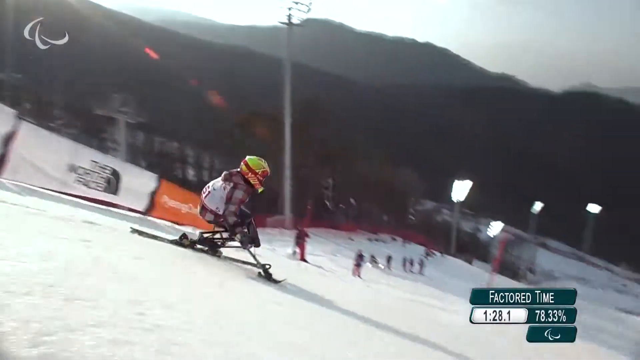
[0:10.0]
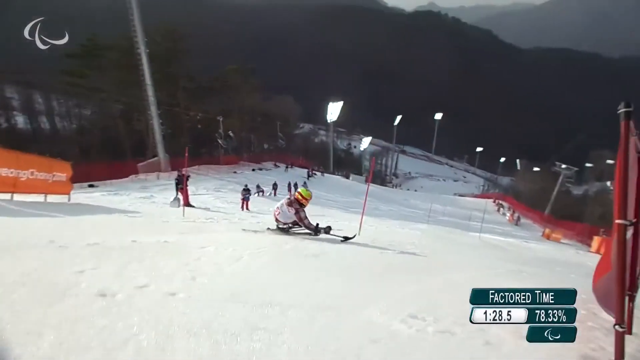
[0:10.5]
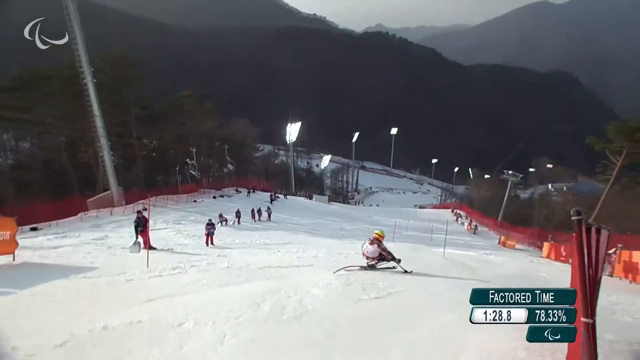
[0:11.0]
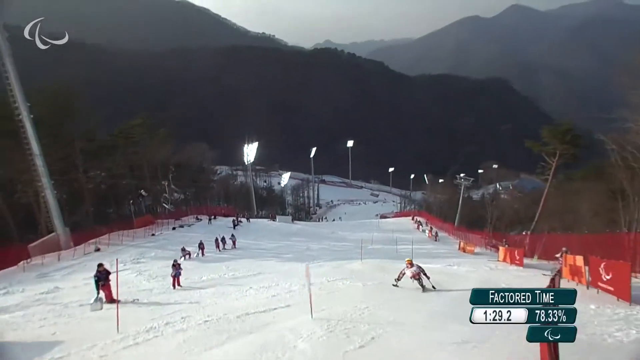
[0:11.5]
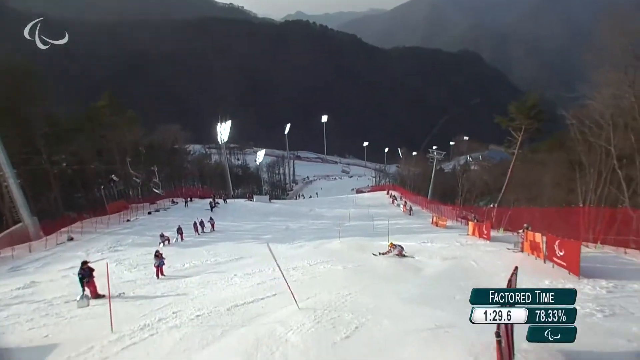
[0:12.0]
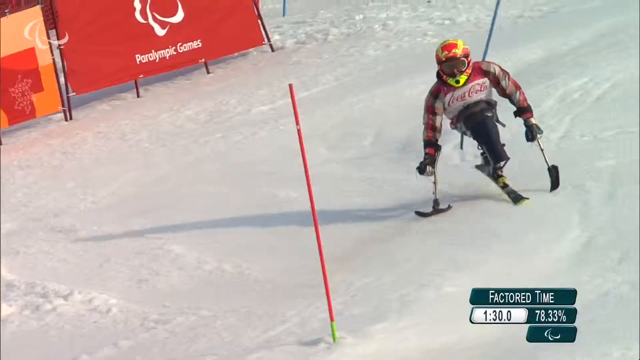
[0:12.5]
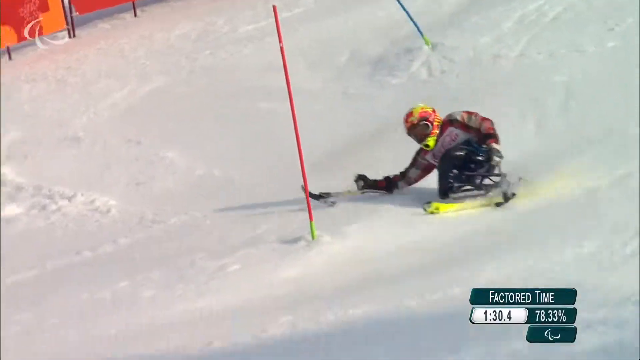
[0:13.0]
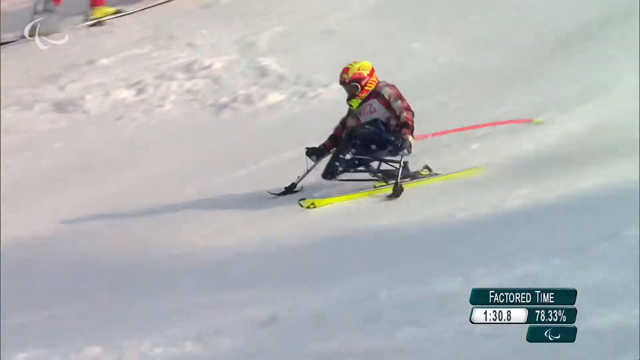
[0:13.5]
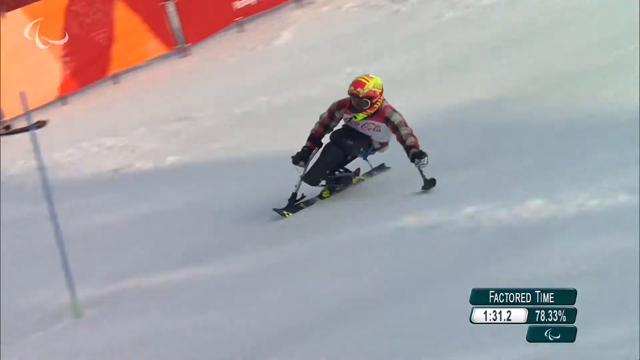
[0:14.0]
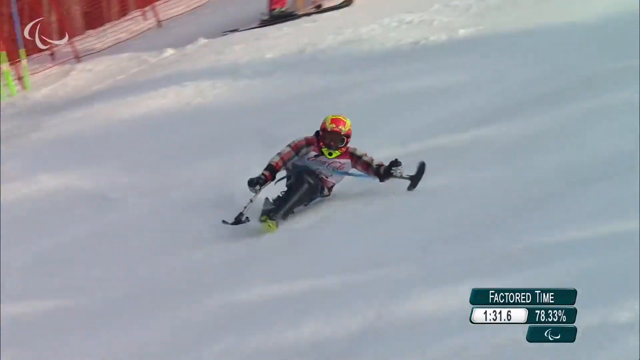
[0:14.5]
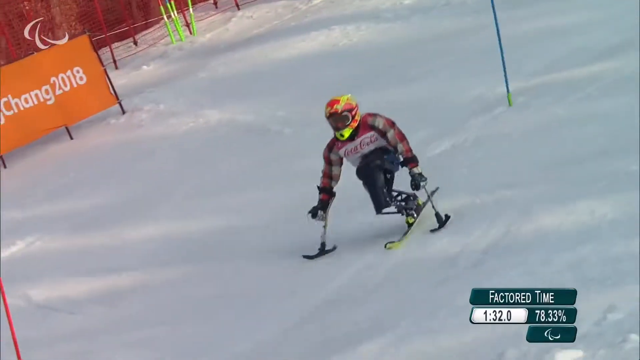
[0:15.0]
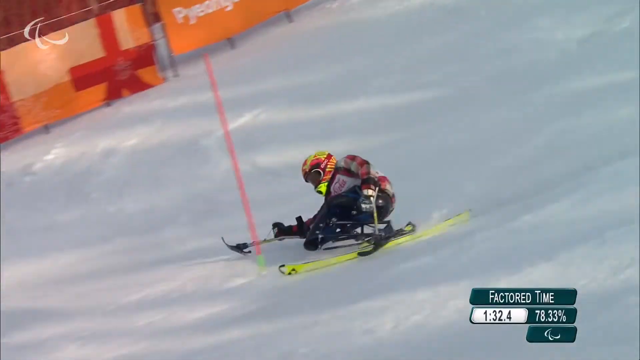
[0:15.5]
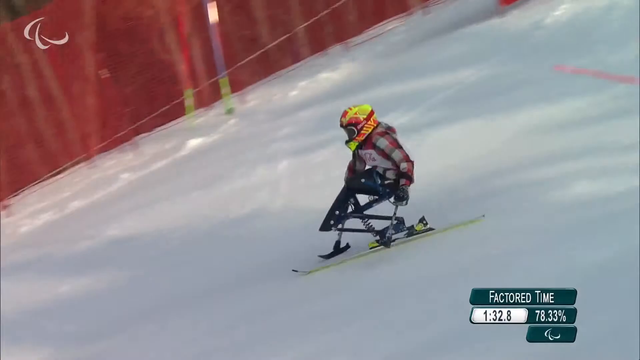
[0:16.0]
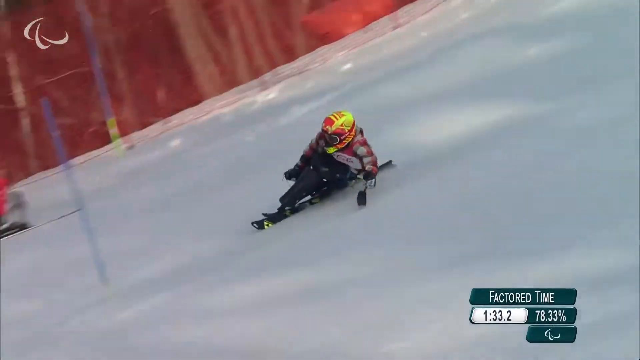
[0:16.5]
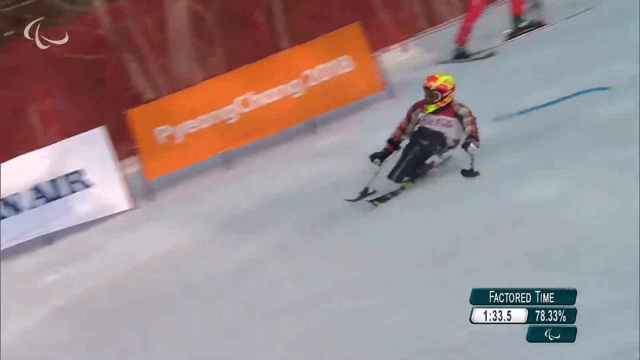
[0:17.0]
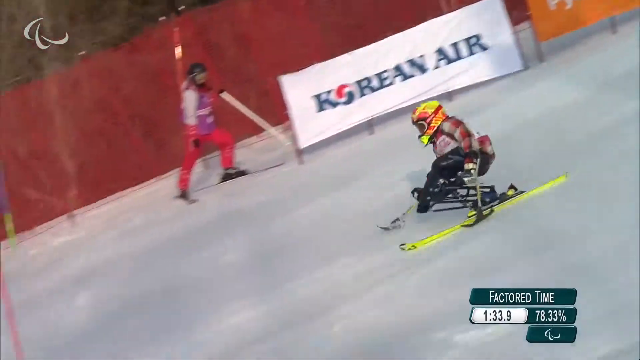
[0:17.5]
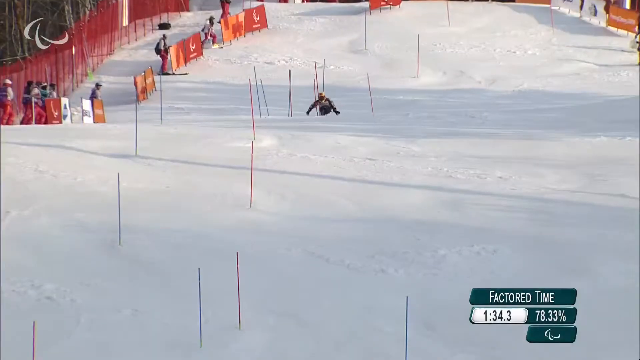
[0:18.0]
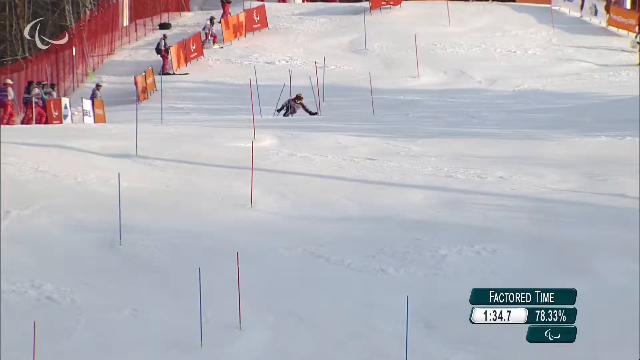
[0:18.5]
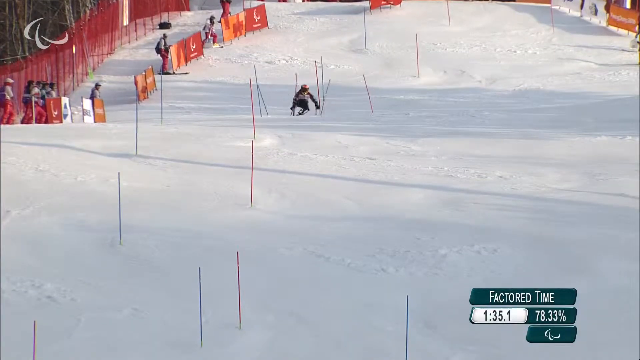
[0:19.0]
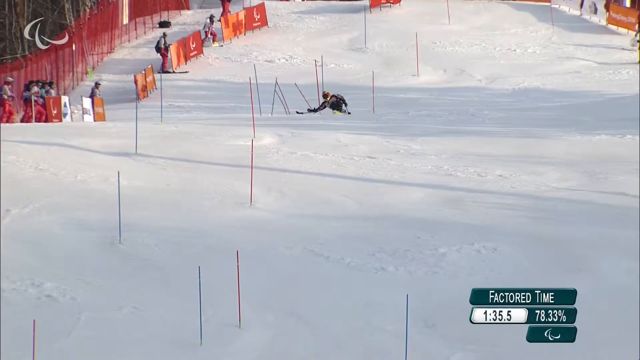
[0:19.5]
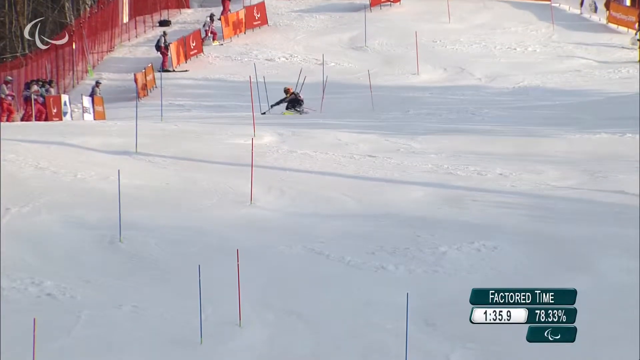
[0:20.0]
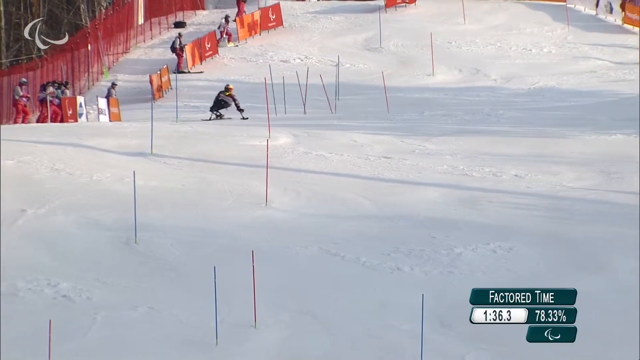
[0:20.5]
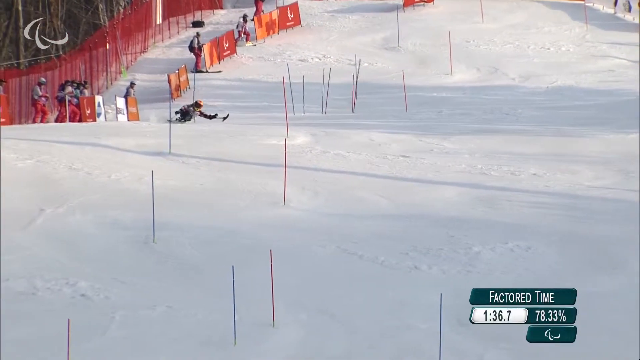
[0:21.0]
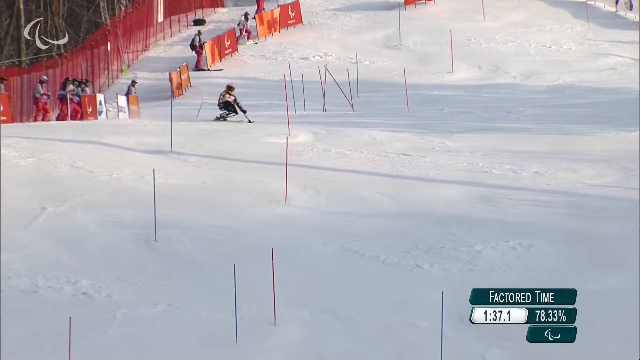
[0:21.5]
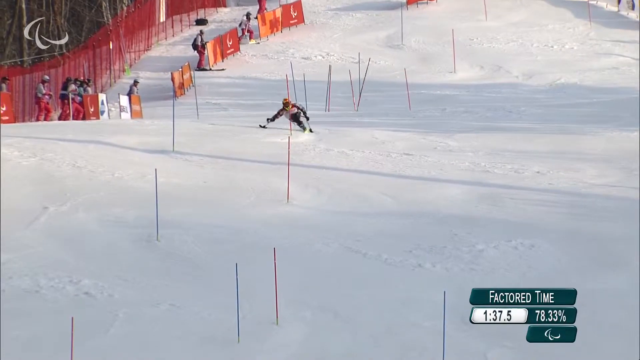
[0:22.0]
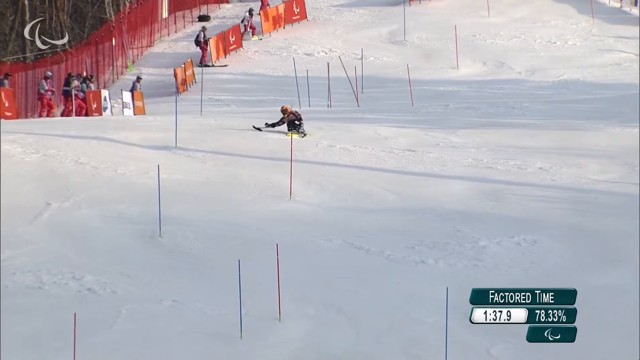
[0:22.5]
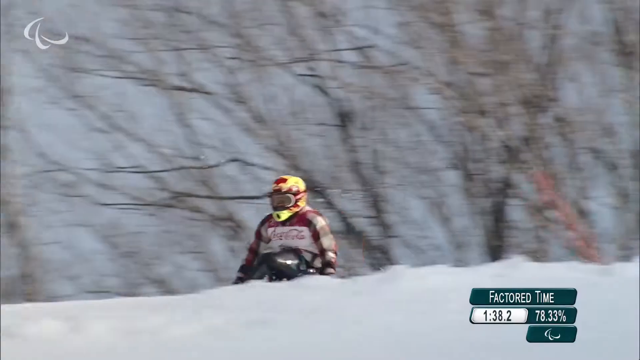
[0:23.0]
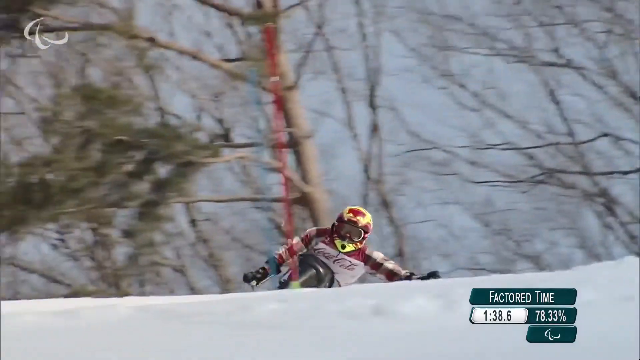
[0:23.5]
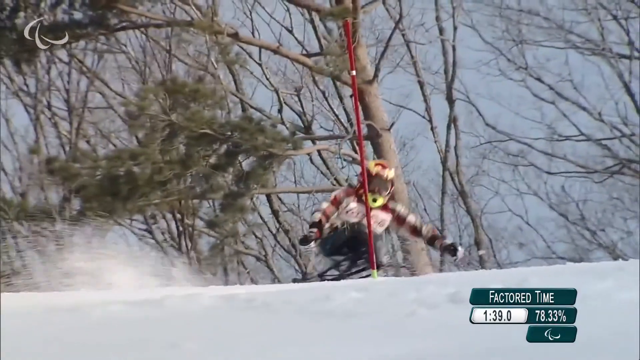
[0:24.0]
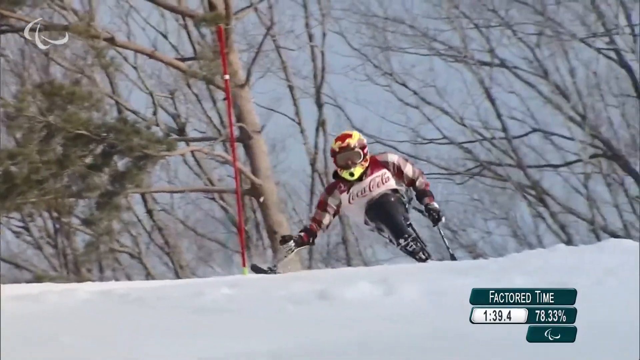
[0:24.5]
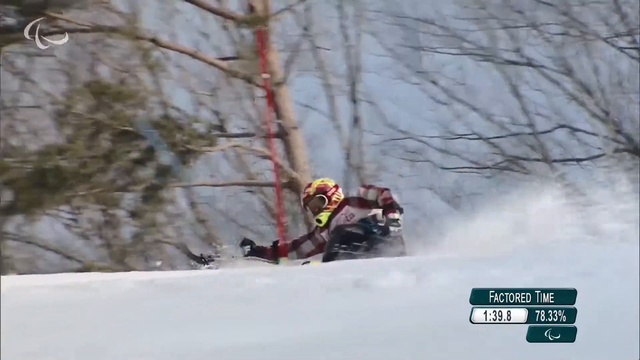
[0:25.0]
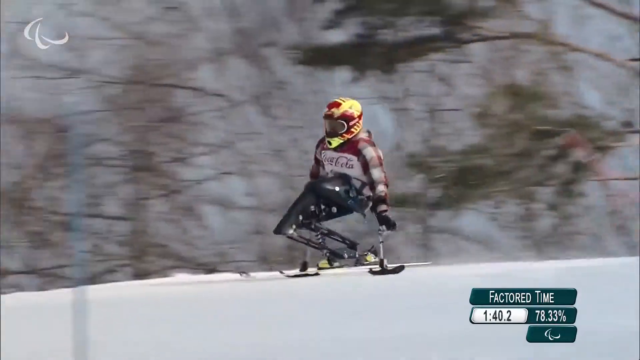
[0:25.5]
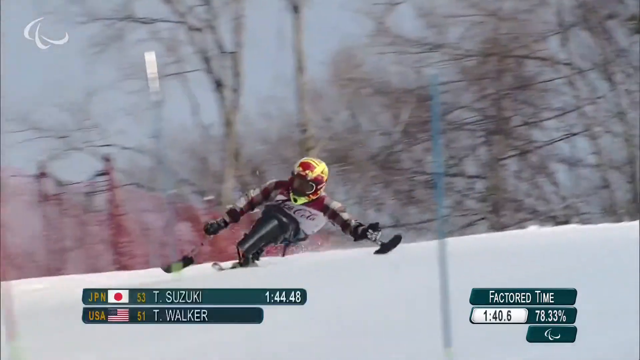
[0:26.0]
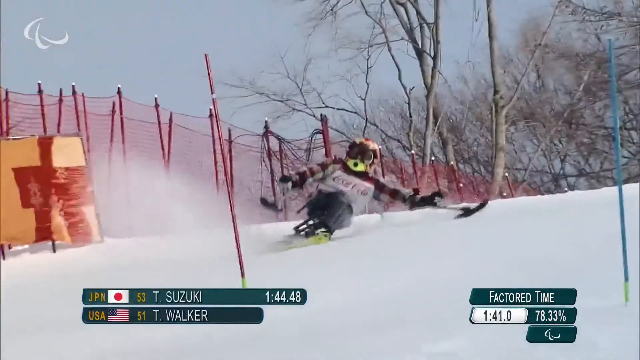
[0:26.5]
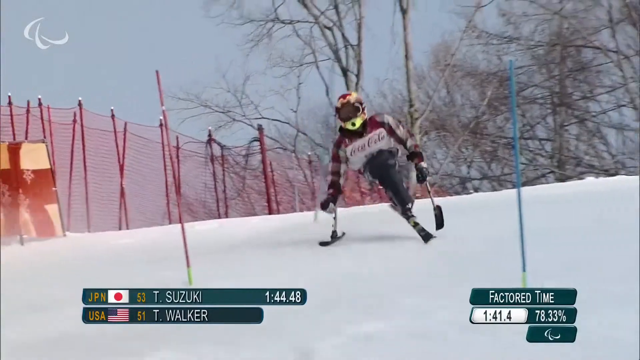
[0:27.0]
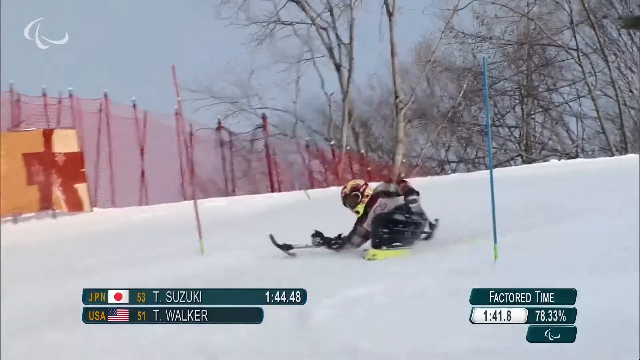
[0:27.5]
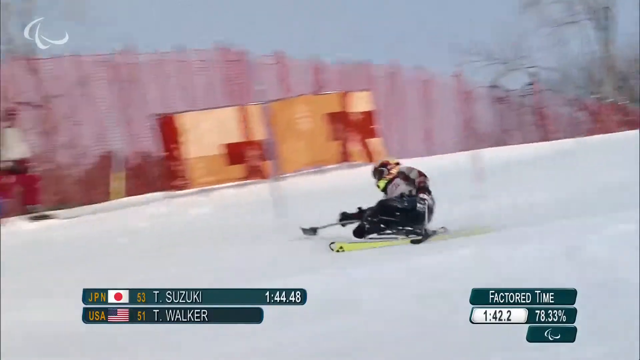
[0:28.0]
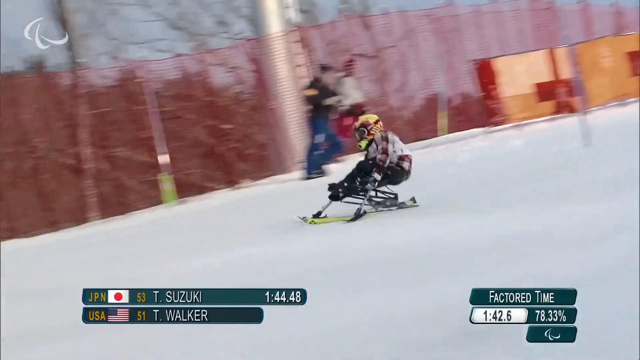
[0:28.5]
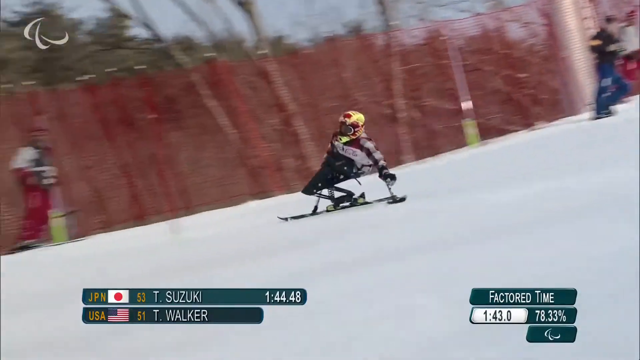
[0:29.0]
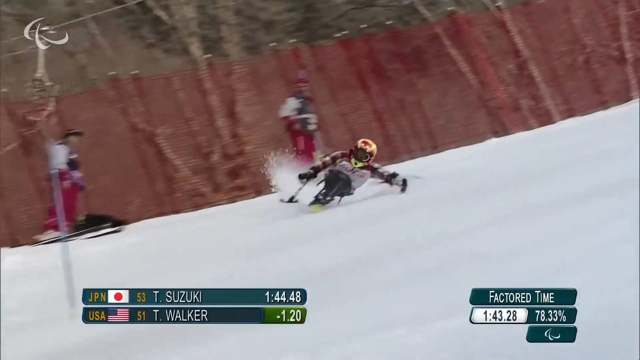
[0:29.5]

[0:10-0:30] A Paralympian skier rushes downhill during a race, with ads for the North Face behind them. They ski through red and blue poles, hitting them as they go by, and are seen from both the front and the back. They wear a vest sponsored by Coca-Cola and a bright helmet in a sort of red peachy color and chartreuse yellow, and their number appears to be 51. A score with the factored time is shown. The skier is very agile and quick and looks very talented. The race is outdoors, with lights surrounding the track and people watching from the sides. A small gray logo of three swoops is in the upper left corner.